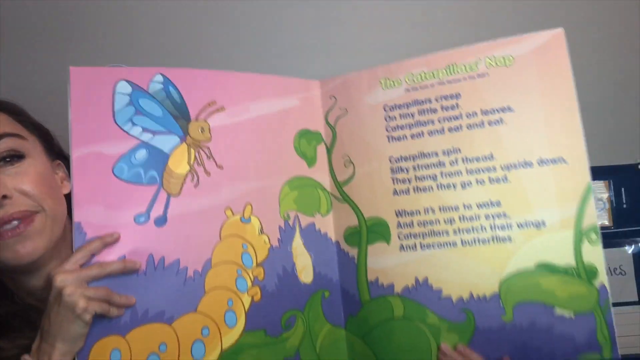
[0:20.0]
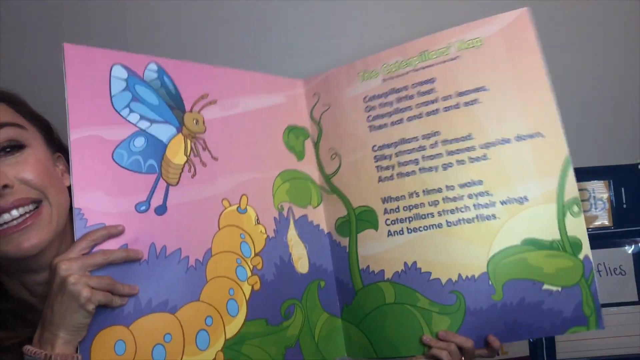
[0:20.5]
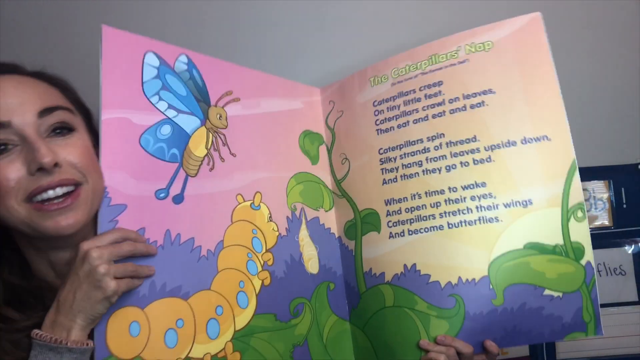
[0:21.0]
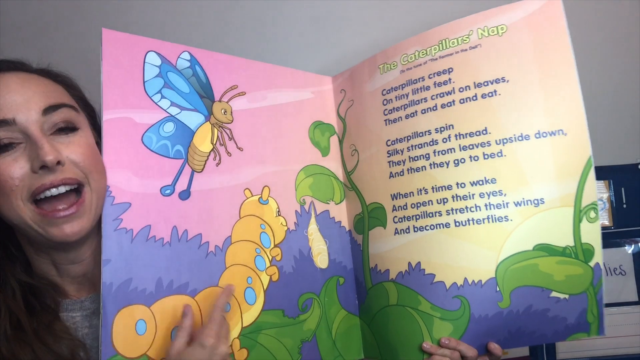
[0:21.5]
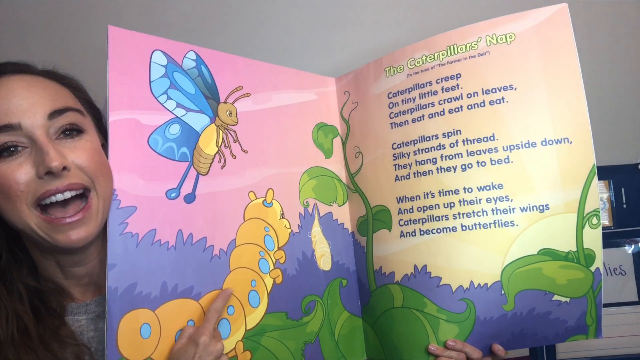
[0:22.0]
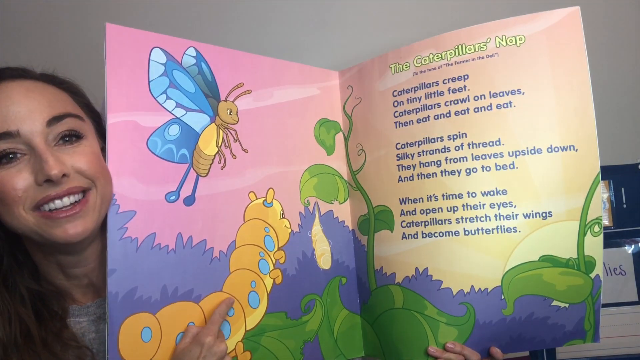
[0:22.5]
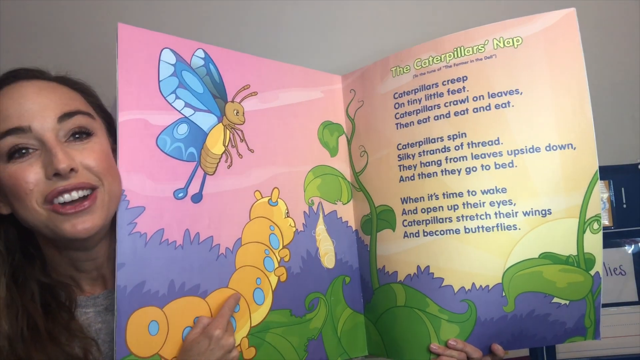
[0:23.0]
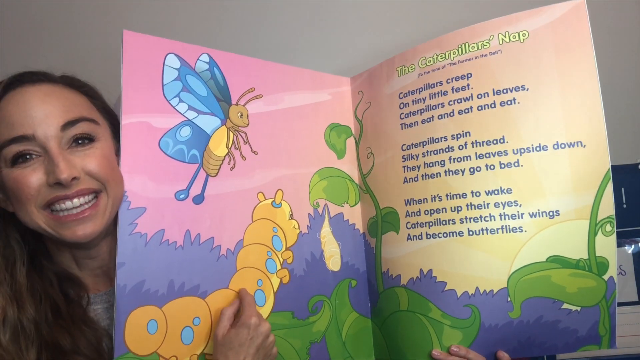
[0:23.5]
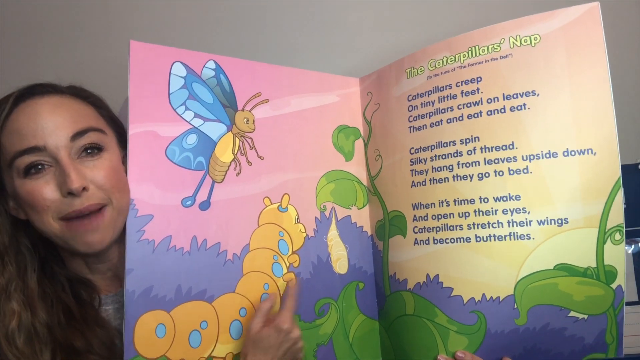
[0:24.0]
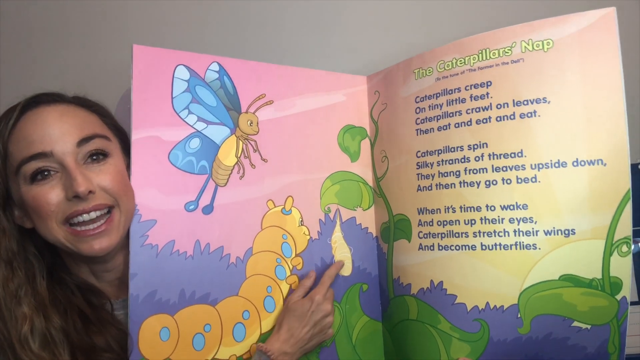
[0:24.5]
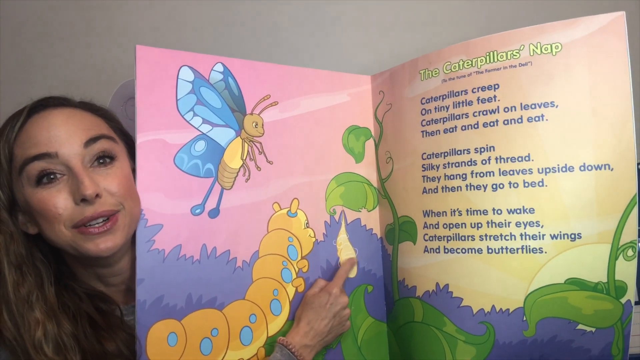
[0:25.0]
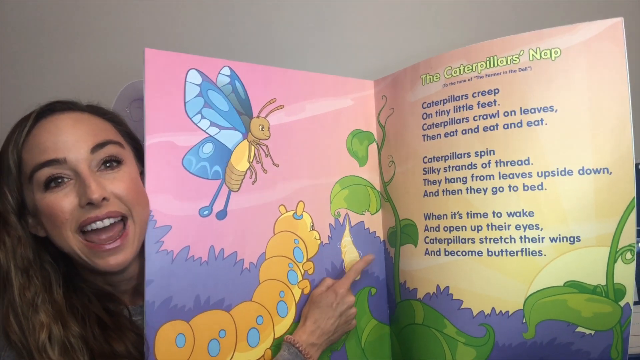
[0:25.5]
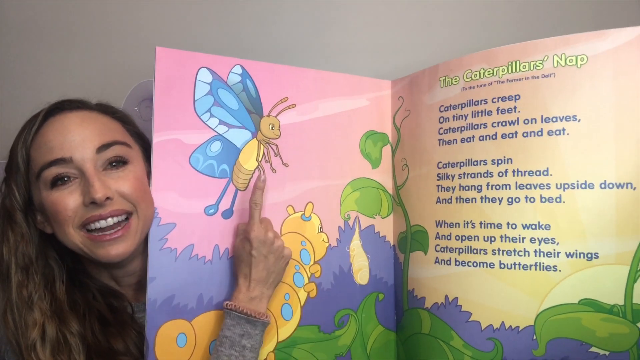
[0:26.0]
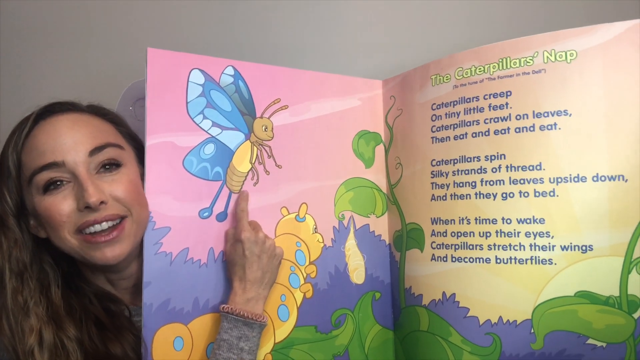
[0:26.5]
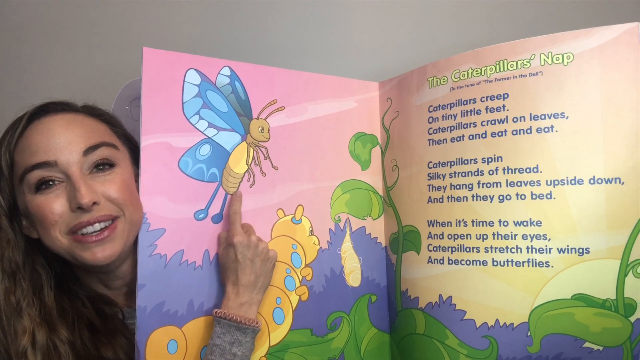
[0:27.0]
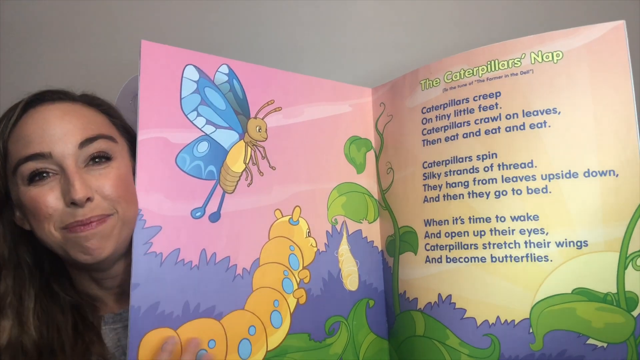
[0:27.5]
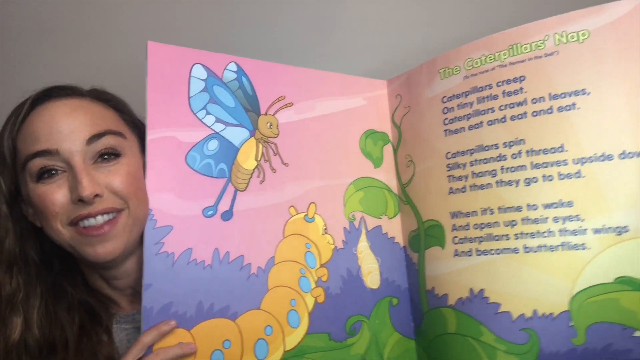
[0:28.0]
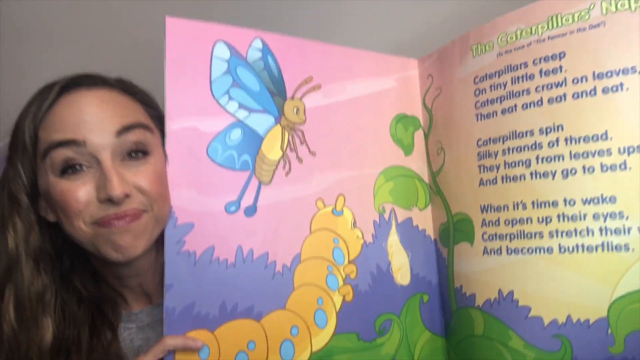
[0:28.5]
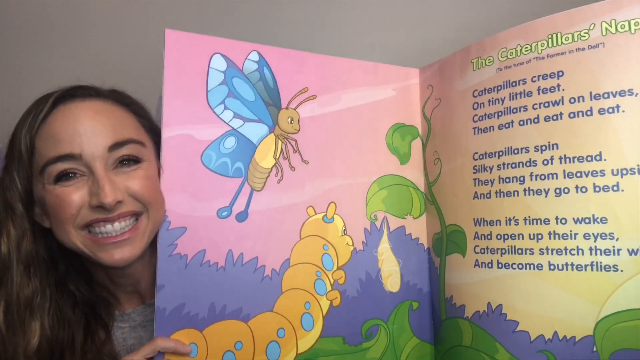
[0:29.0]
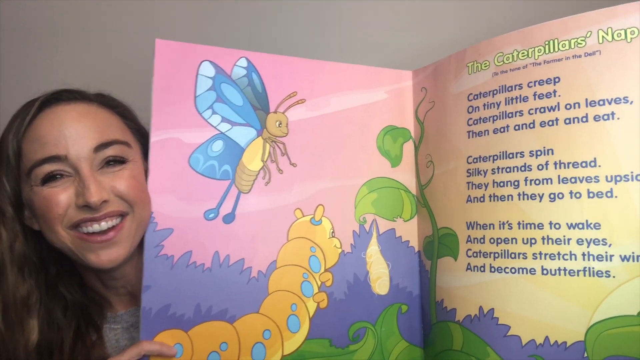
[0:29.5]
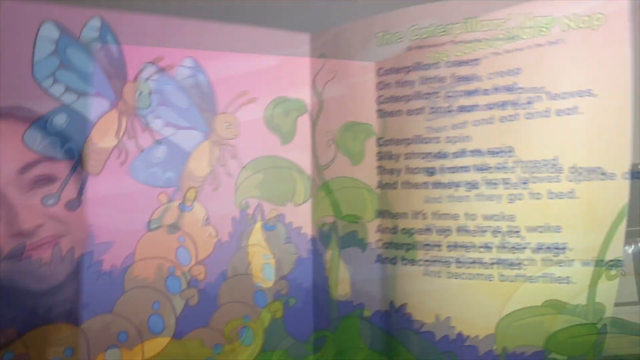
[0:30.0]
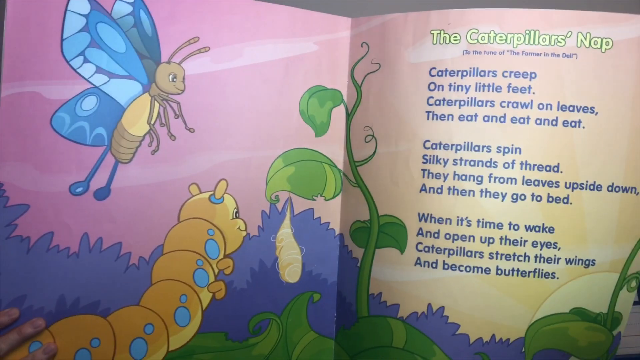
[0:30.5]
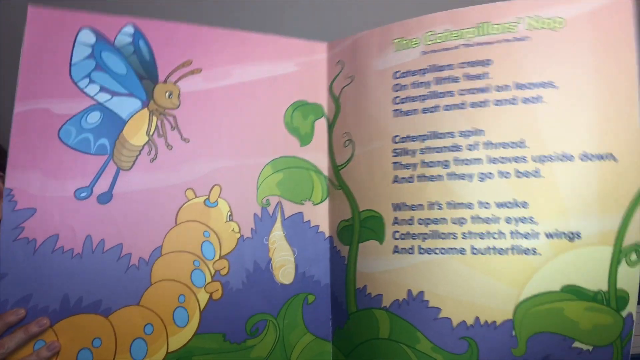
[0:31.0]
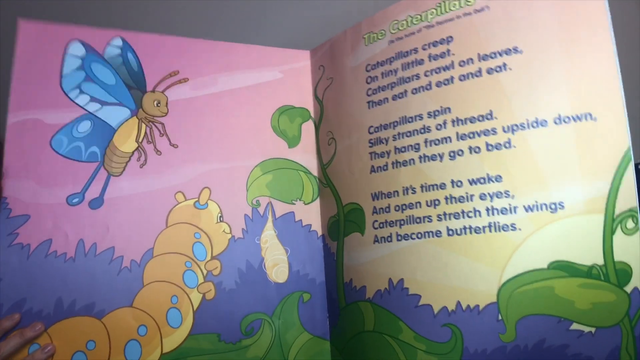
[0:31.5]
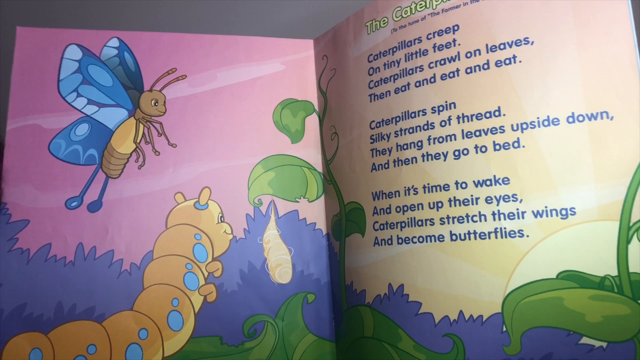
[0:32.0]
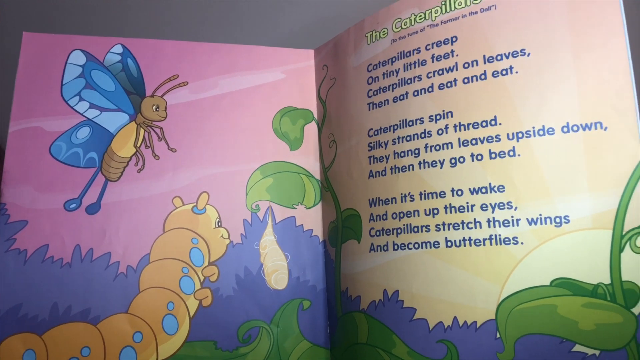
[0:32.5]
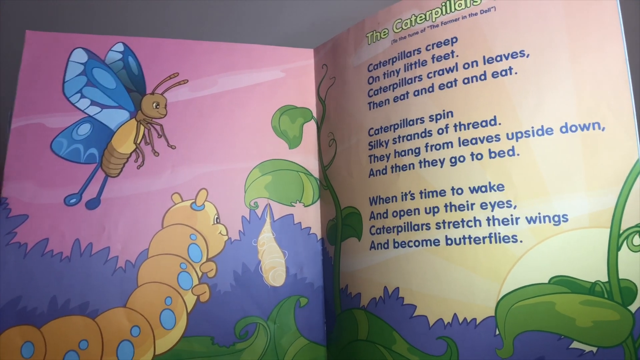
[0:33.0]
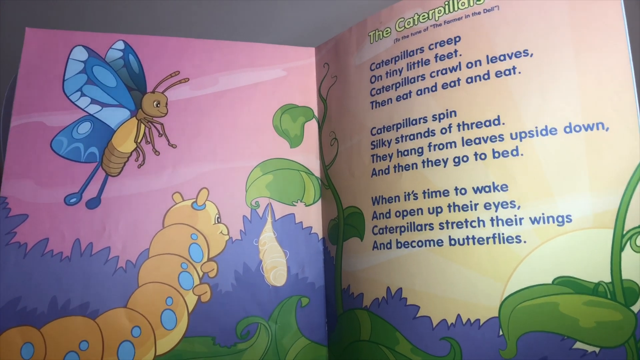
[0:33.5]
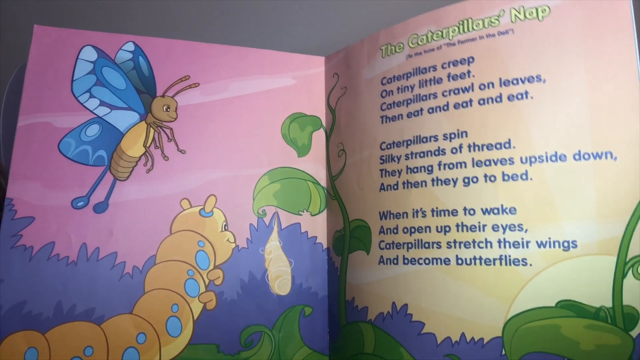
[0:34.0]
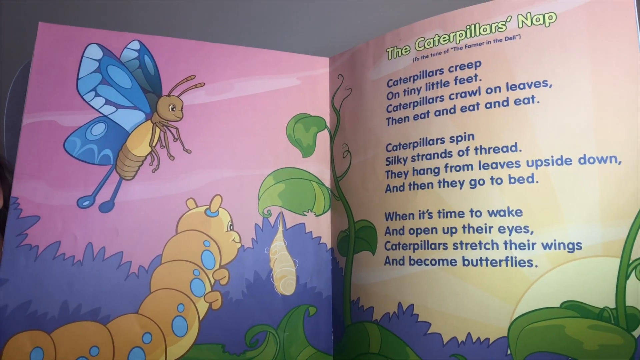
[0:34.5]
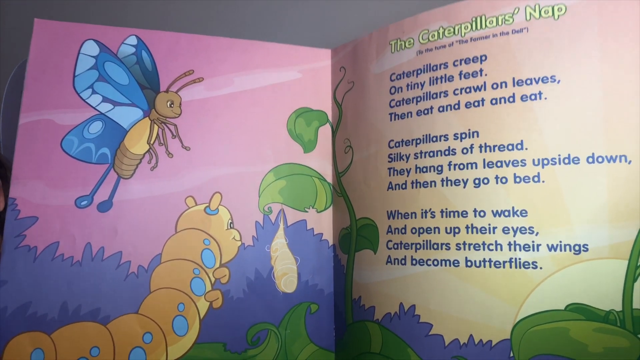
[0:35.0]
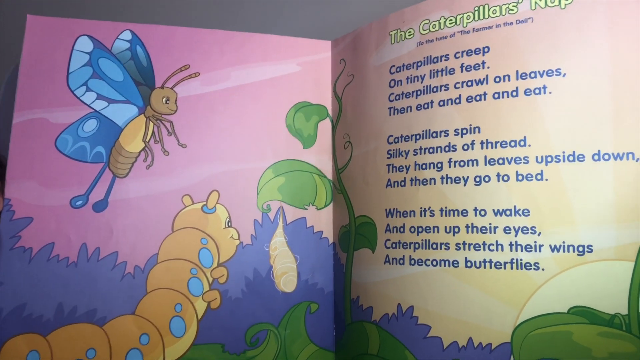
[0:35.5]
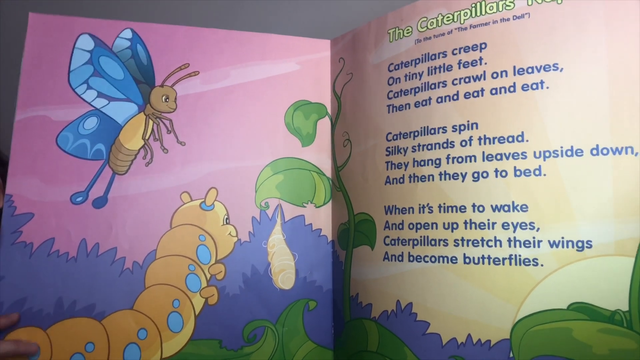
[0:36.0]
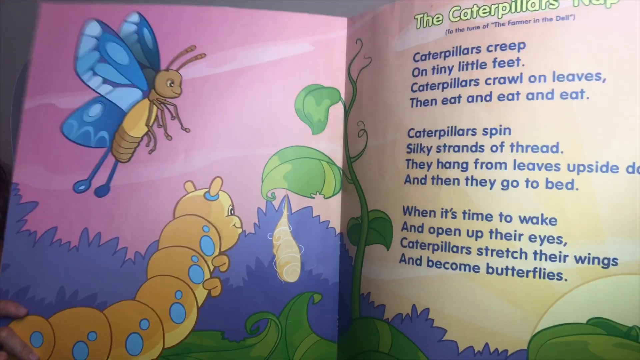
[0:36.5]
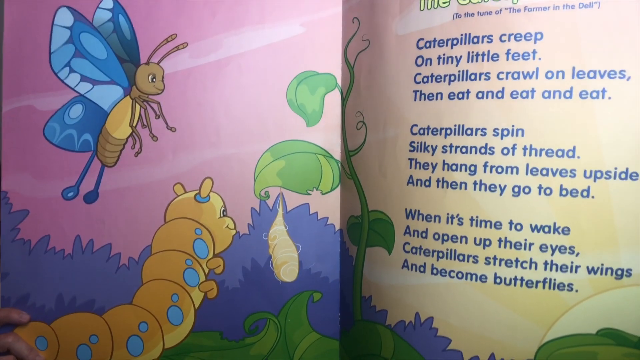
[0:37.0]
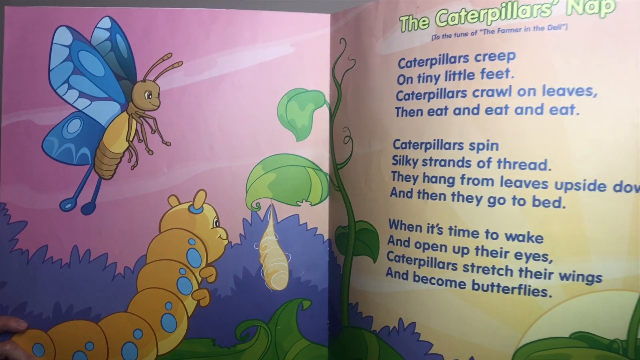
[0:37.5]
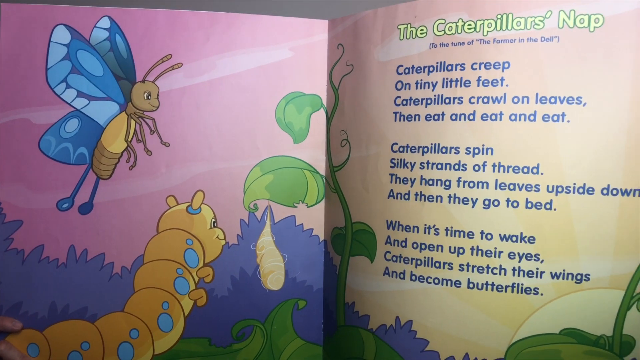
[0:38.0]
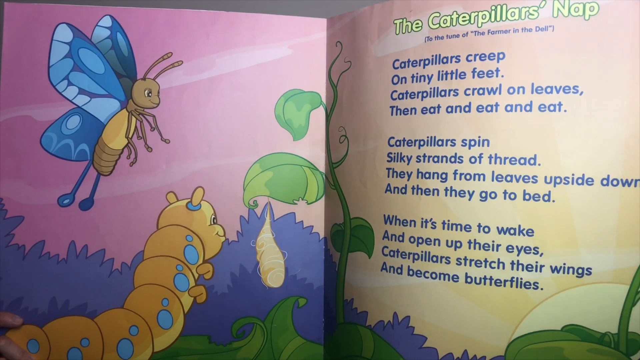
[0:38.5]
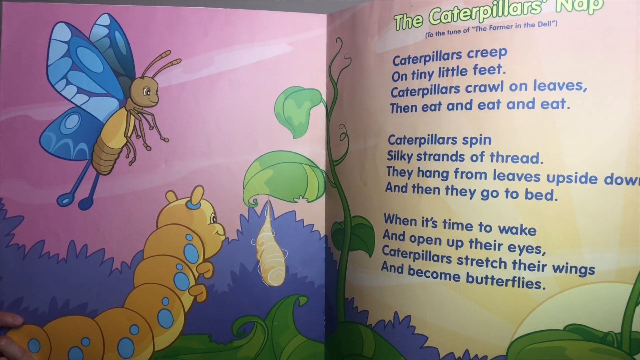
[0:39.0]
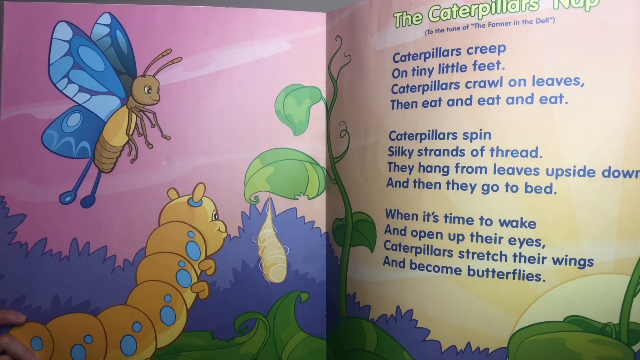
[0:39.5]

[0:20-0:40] The woman points out different bugs and parts of an image in the large book she holds up to the camera: a caterpillar, what looks like a chrysalis, and apparently a butterfly. Then she is no longer visible and only the book is shown, presumably as she starts reading it. The page is titled "The Caterpillar's Nap" and appears to be a song set to a tune. The text reads: "caterpillars creep on tiny little feet caterpillars crawl on leaves and eat and eat and eat caterpillar spins silky strands of thread they hang from leaves upside down and then they go to bed it's time to wake and open up their eyes caterpillar stretch their wings and become butterflies".